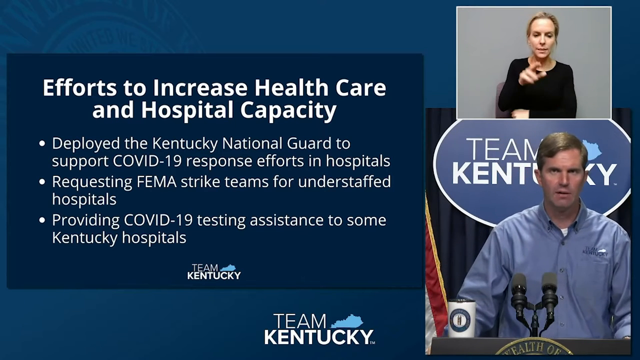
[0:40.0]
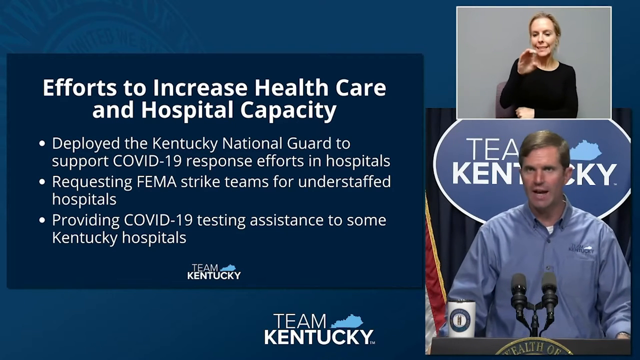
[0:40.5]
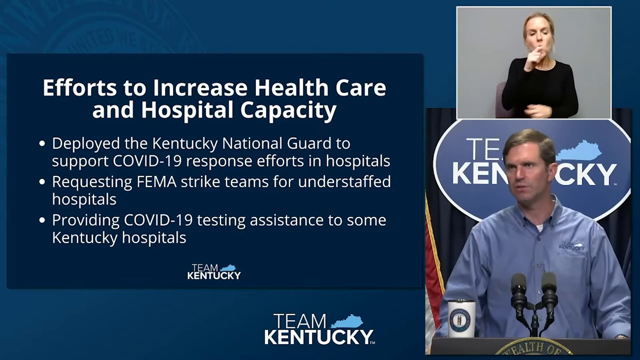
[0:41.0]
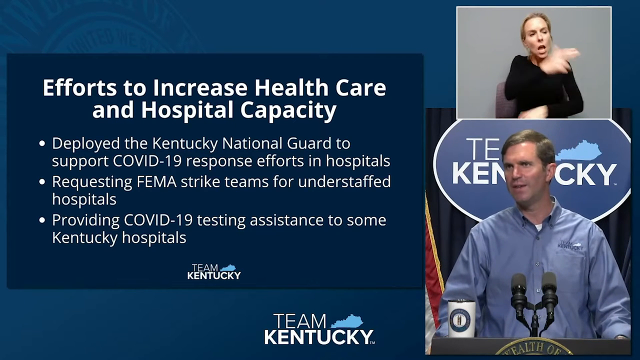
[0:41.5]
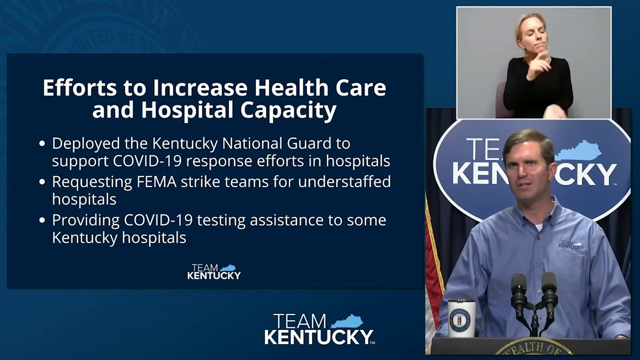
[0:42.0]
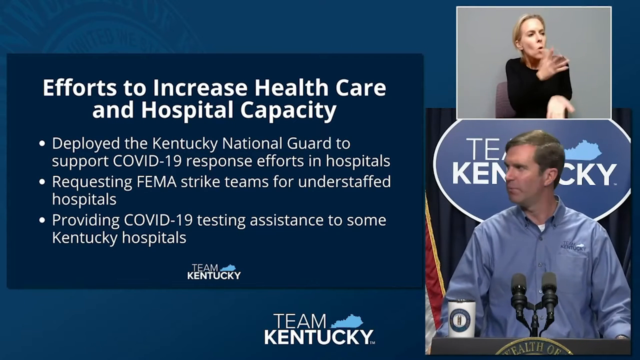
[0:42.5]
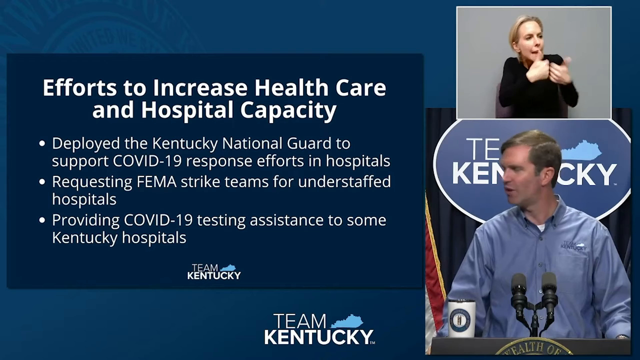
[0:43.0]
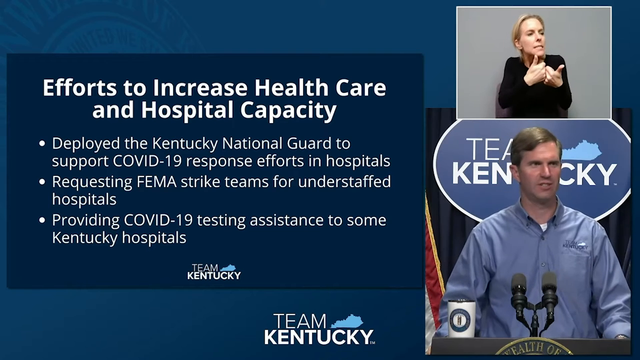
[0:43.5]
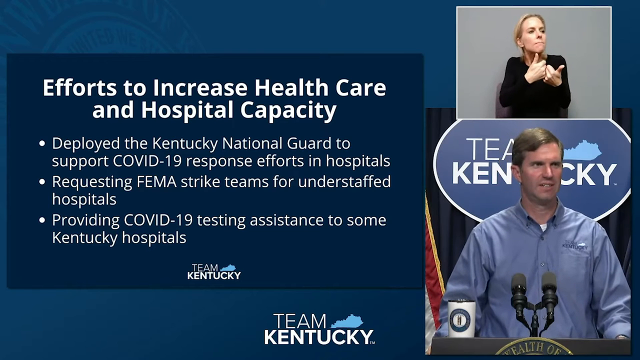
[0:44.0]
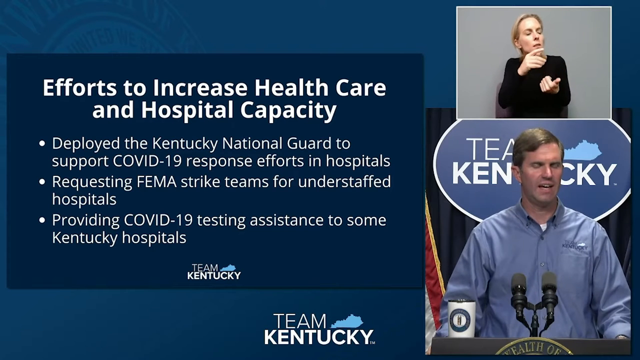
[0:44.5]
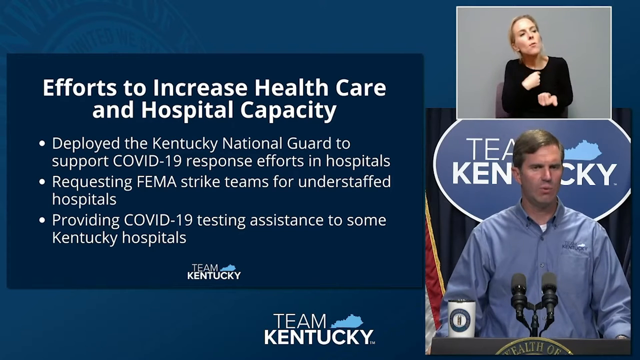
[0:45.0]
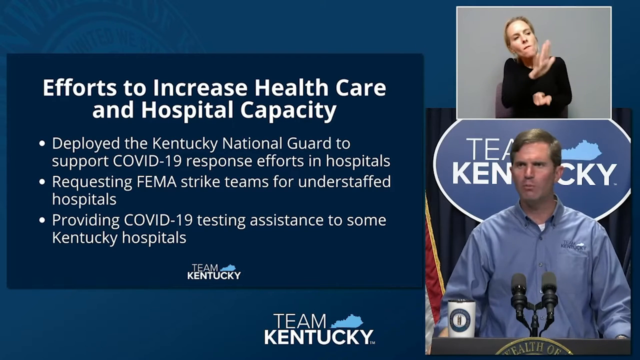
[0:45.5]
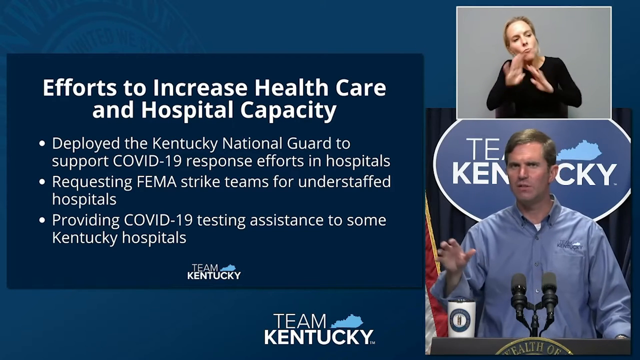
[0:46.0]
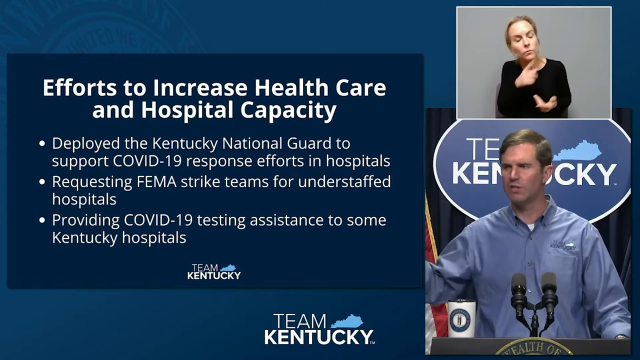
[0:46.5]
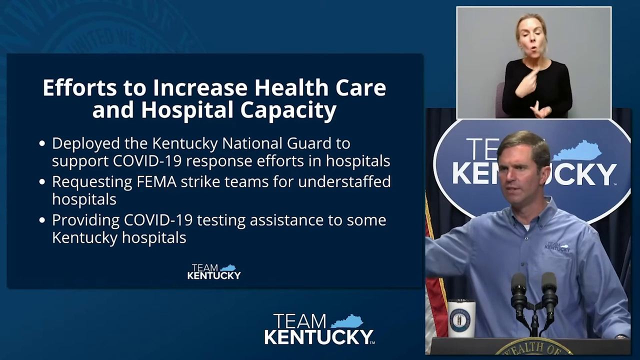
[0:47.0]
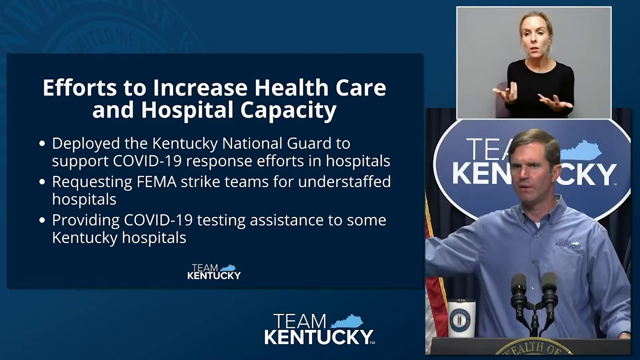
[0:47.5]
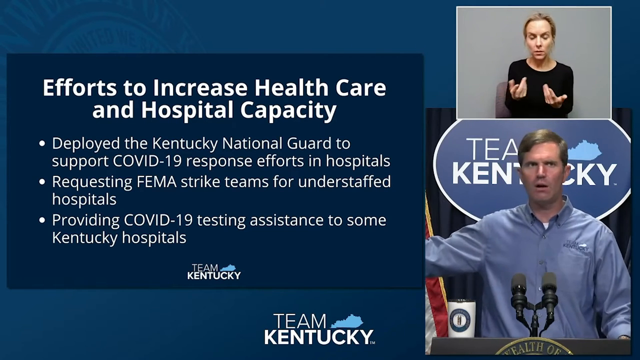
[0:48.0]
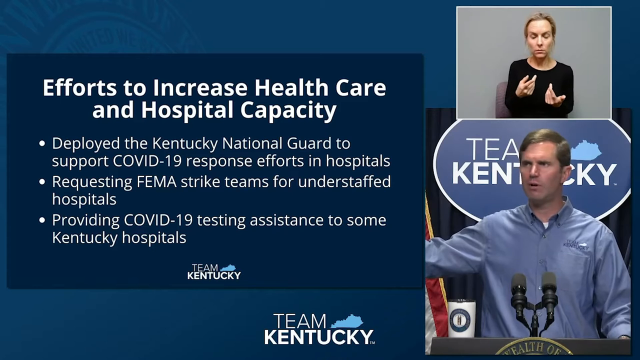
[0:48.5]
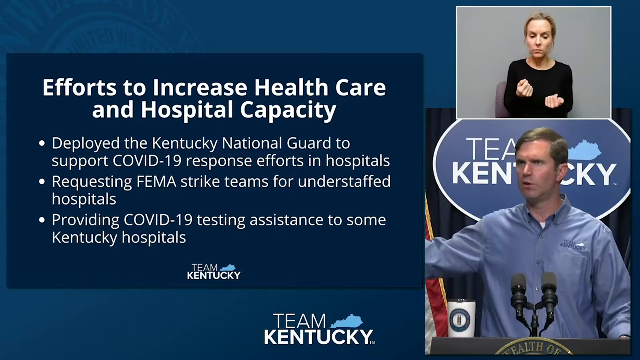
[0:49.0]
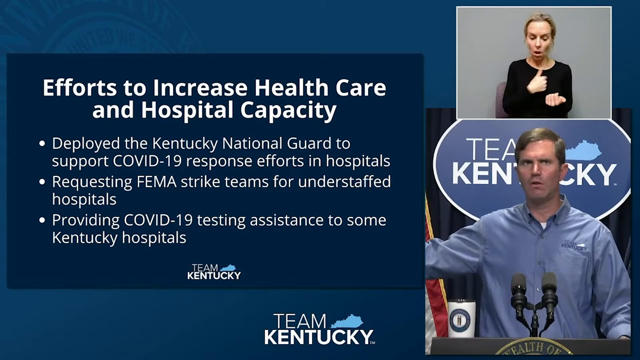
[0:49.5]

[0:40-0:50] From a TV station in Kentucky, a team addresses plans for COVID-19. In a rectangular box in the upper right-hand corner, a woman does sign language for deaf viewers, conveying what the governor or spokesperson in the lower portion of the screen is saying. He stands in front of microphones, talking about efforts to increase health care and hospital capacity in Kentucky.